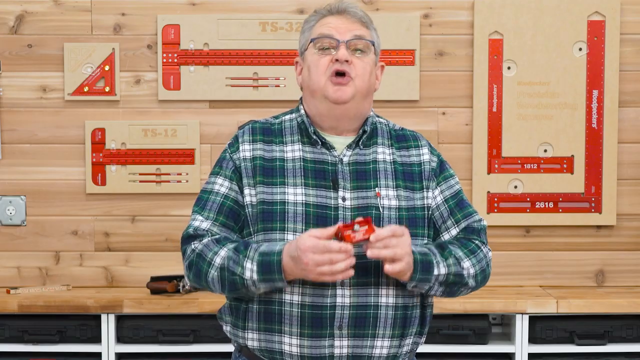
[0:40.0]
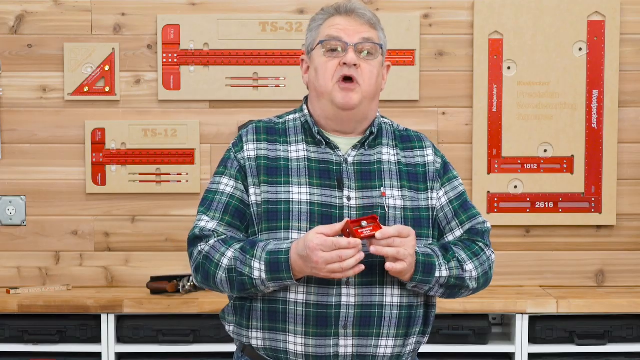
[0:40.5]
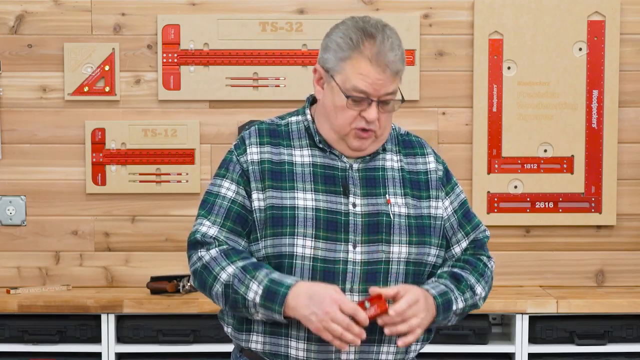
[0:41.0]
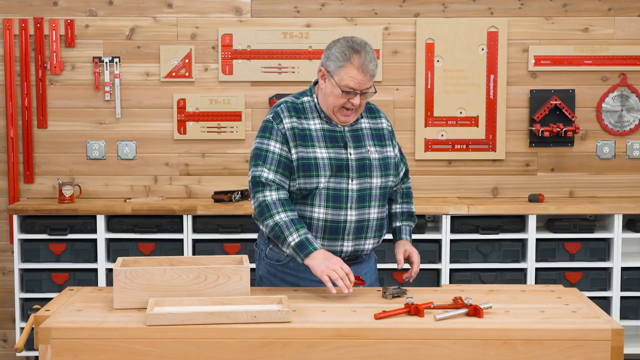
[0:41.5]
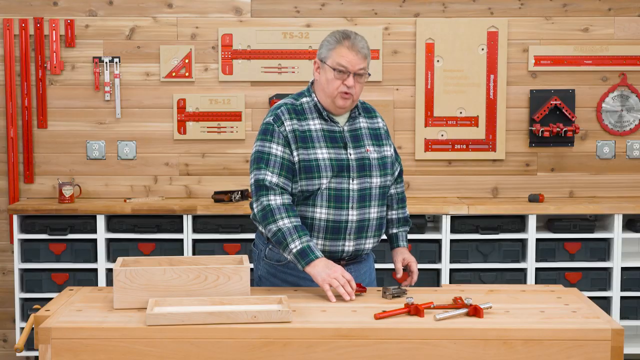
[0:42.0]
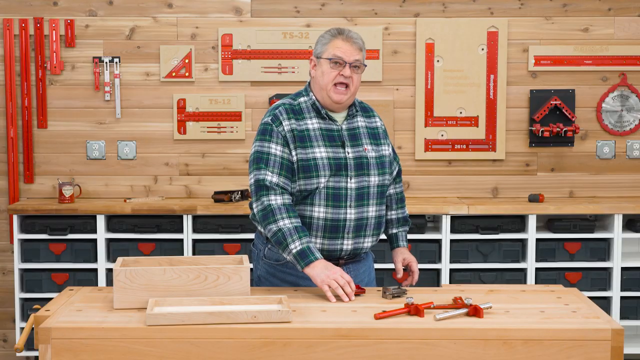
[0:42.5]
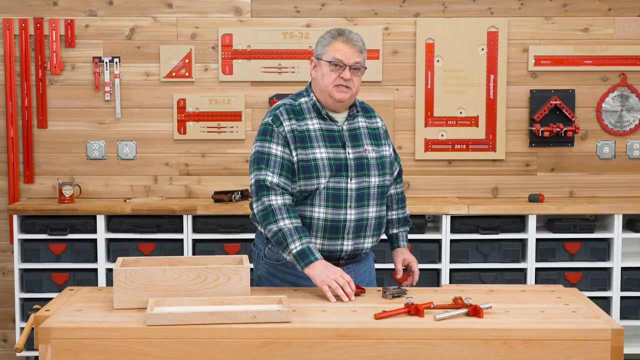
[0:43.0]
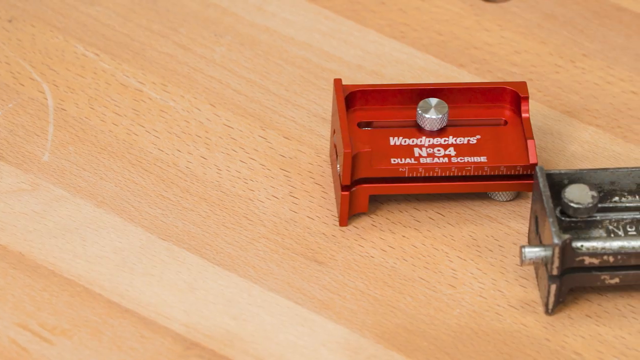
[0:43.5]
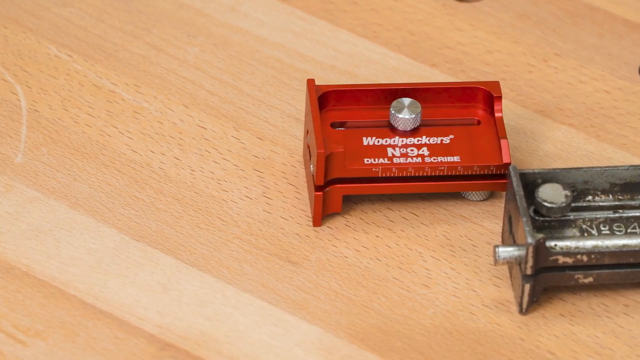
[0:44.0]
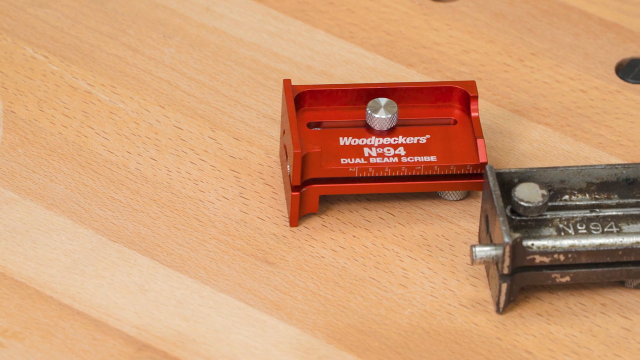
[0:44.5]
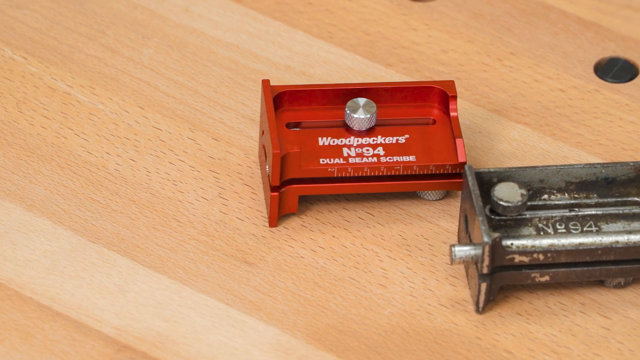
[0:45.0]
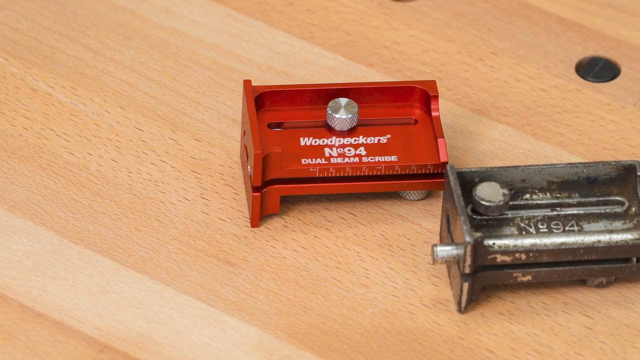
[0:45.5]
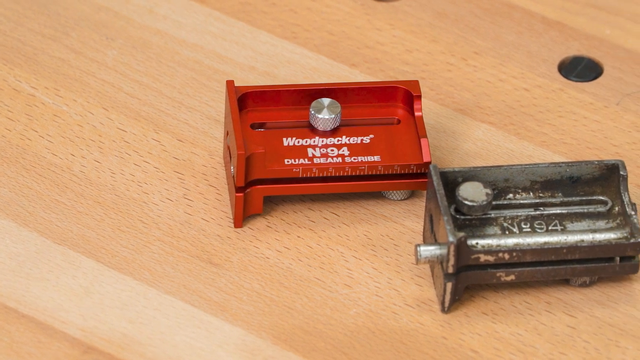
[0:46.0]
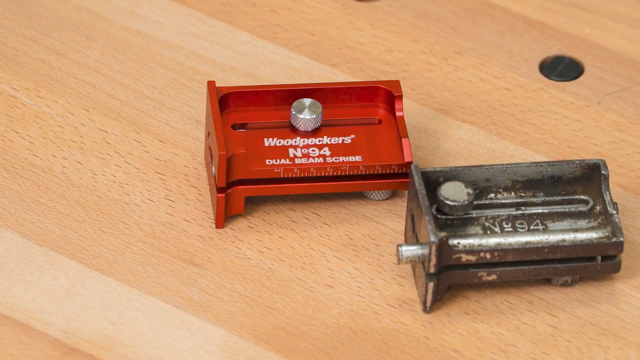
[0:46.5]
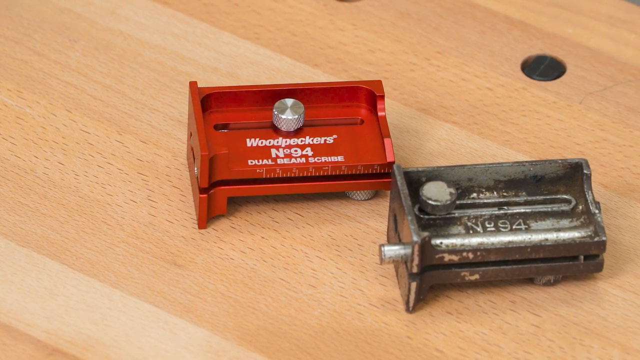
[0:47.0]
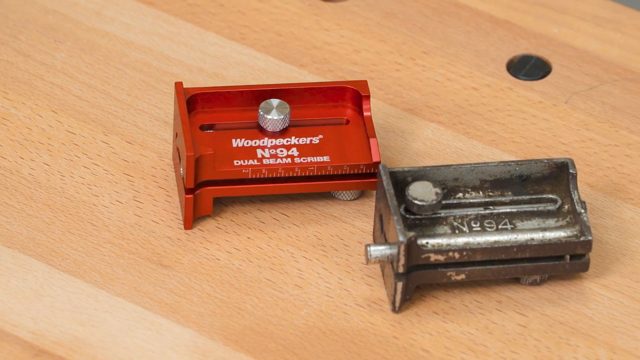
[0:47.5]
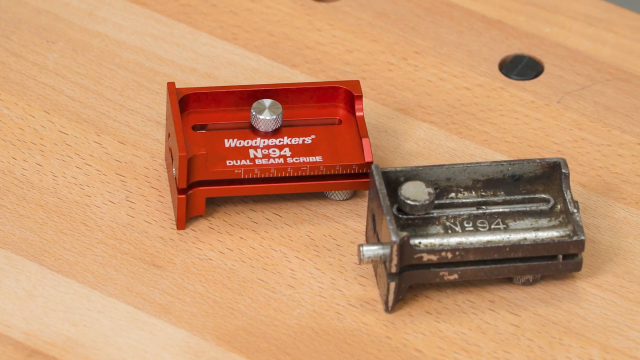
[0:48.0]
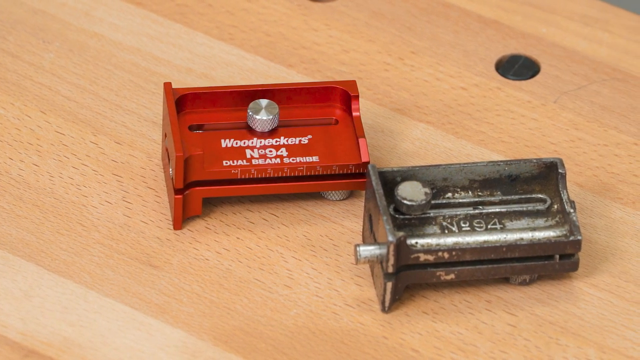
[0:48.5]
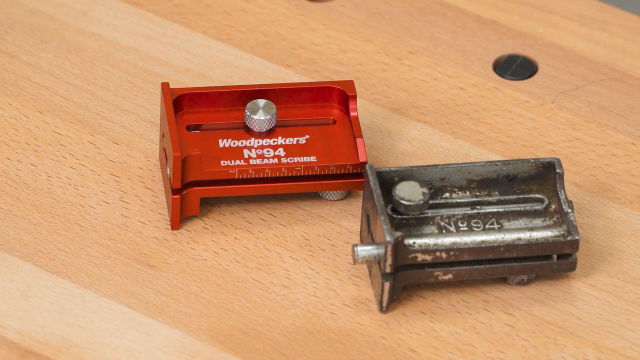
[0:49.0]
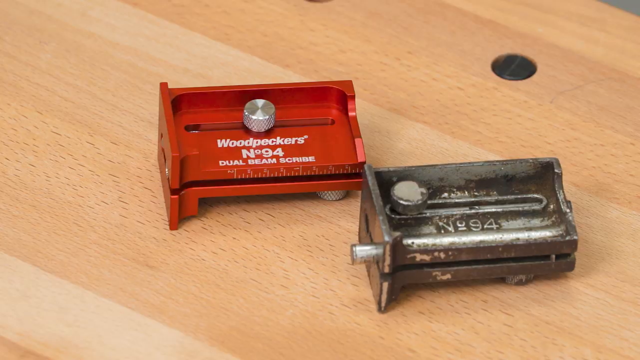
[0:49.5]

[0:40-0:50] A man doing a DIY or how-to demonstration is in a room with tools and measuring instruments on the back wall, such as 90-degree squares and T-squares. He has just picked up an unfamiliar object from a wooden box that almost looks like a cartridge. Text on it reads "woodpeckers number 94 dual beam scribe". The old-fashioned-looking object seen earlier seems to be an older version of the same thing.